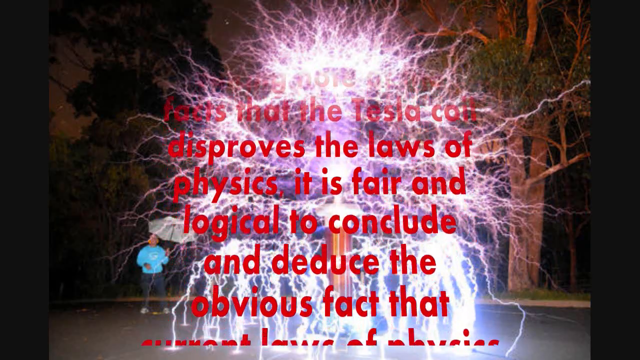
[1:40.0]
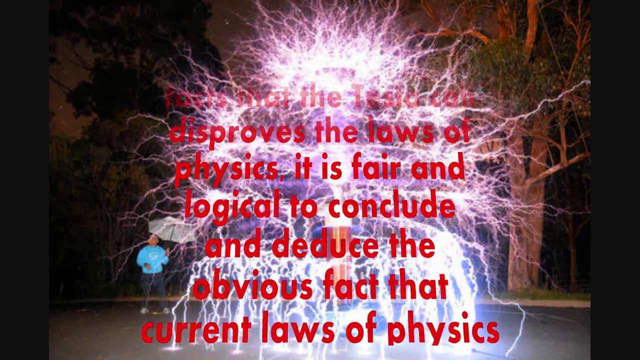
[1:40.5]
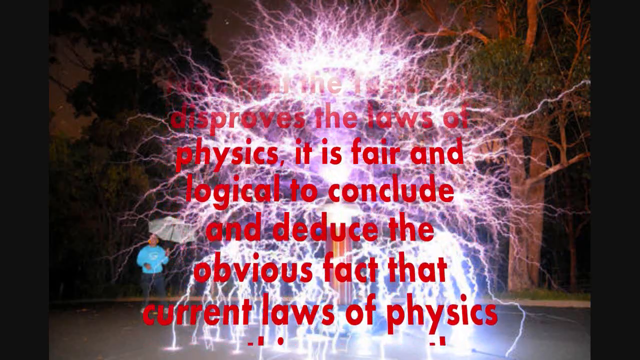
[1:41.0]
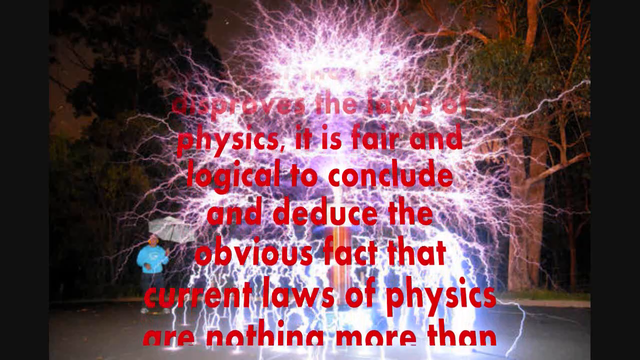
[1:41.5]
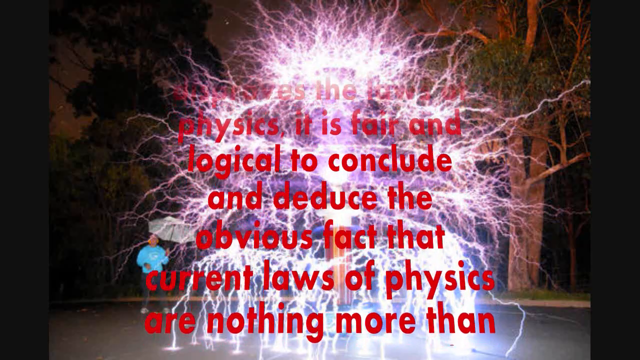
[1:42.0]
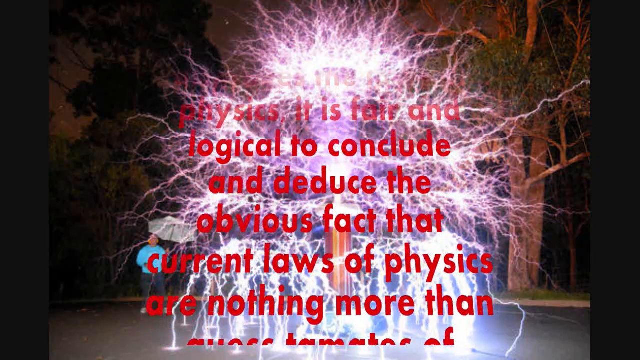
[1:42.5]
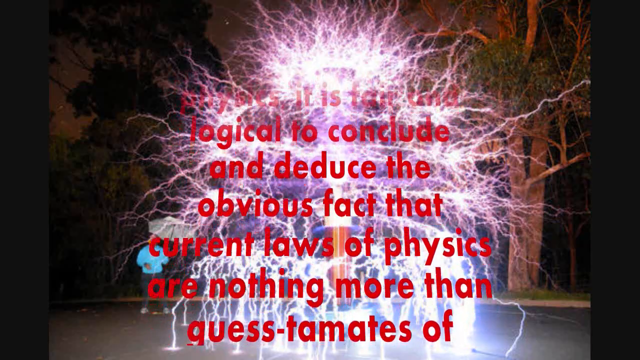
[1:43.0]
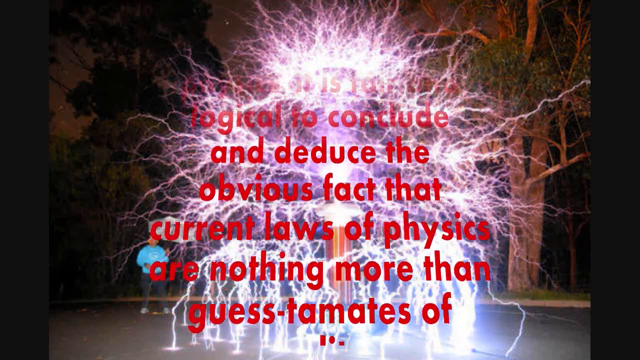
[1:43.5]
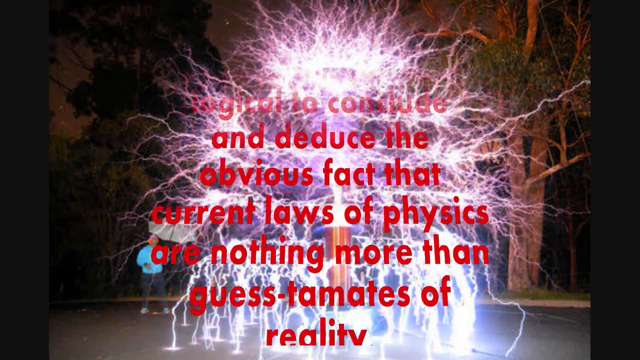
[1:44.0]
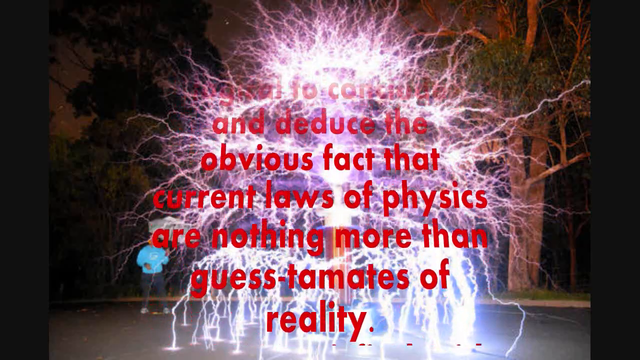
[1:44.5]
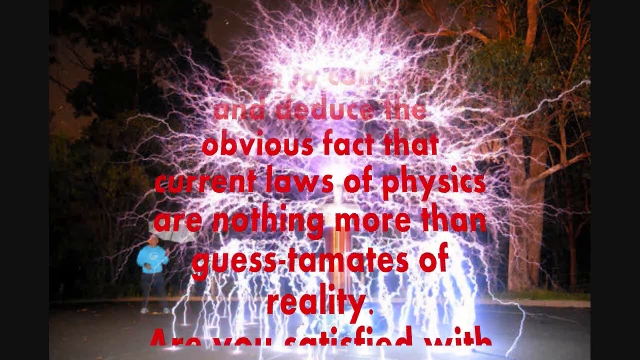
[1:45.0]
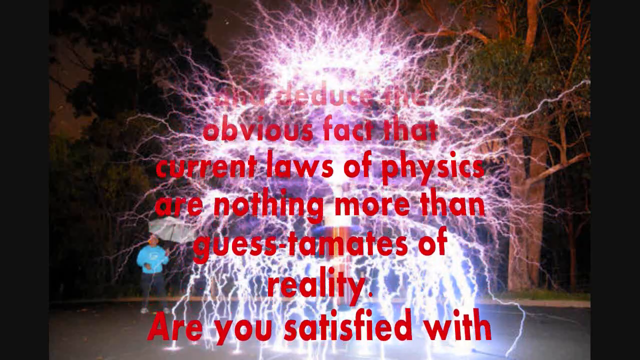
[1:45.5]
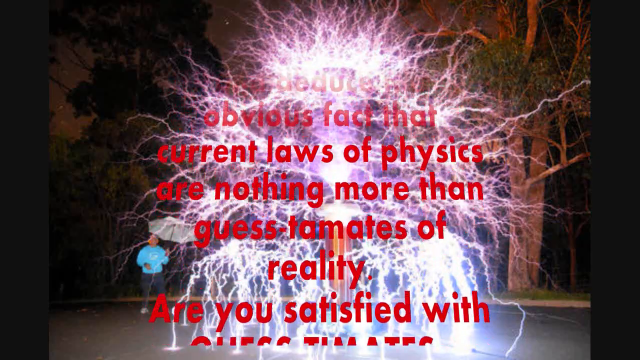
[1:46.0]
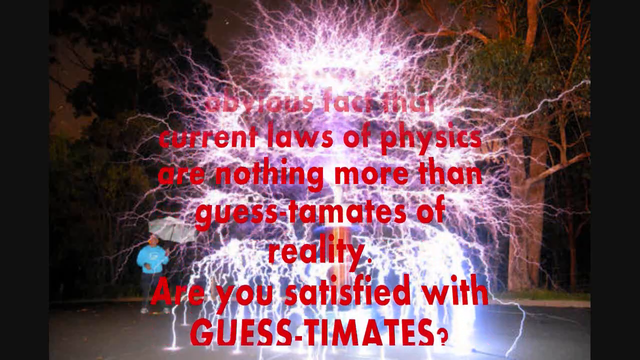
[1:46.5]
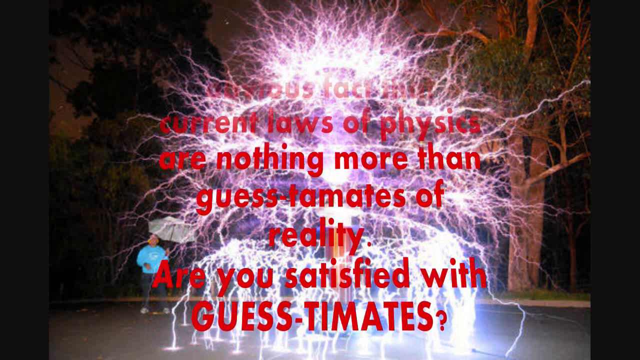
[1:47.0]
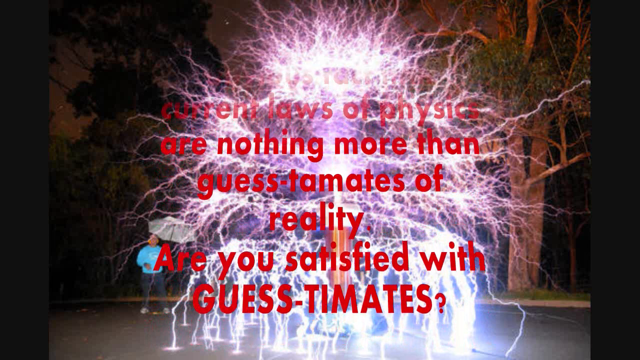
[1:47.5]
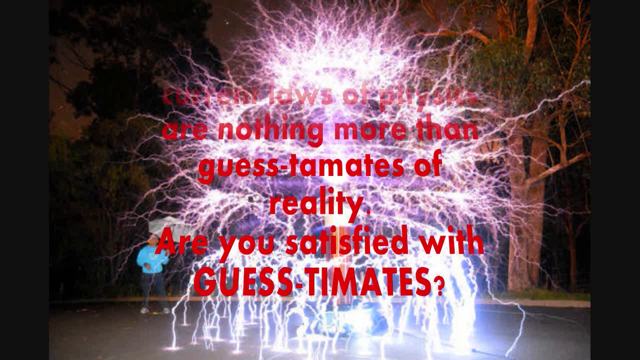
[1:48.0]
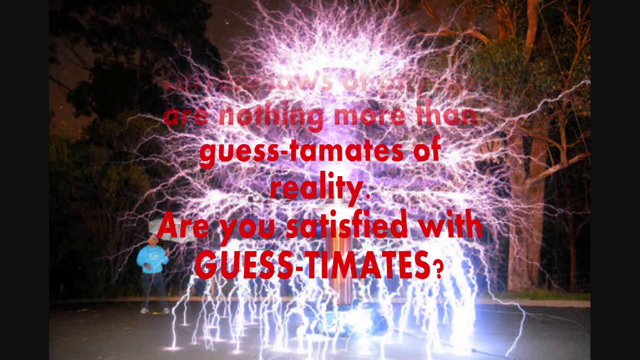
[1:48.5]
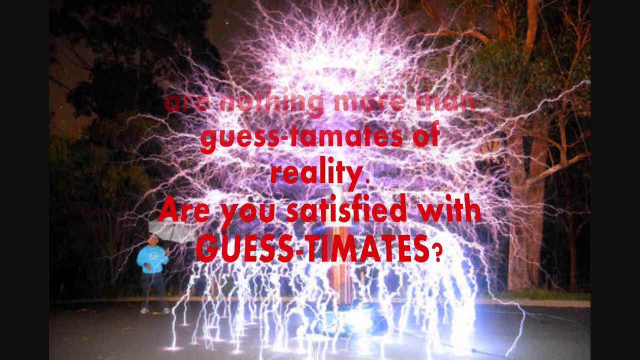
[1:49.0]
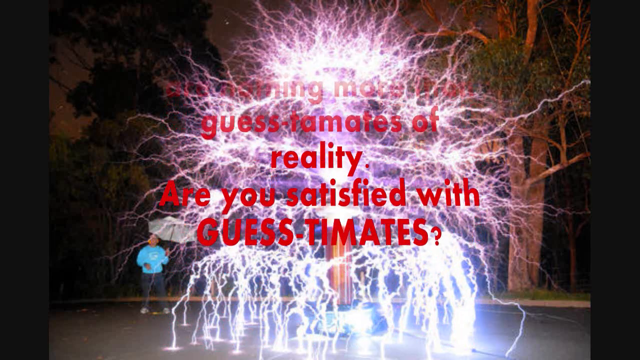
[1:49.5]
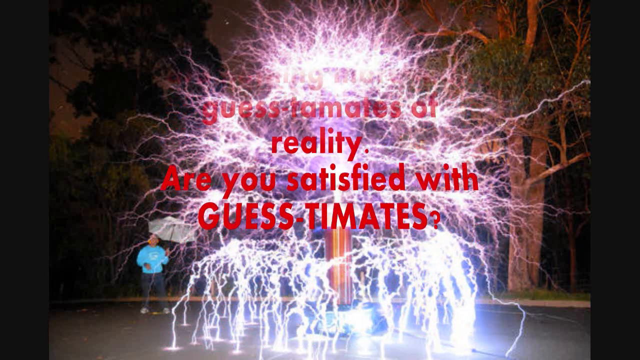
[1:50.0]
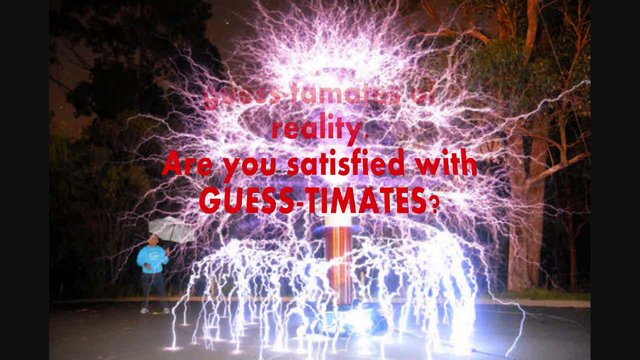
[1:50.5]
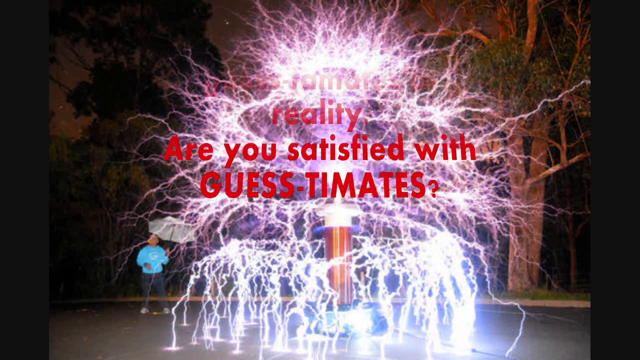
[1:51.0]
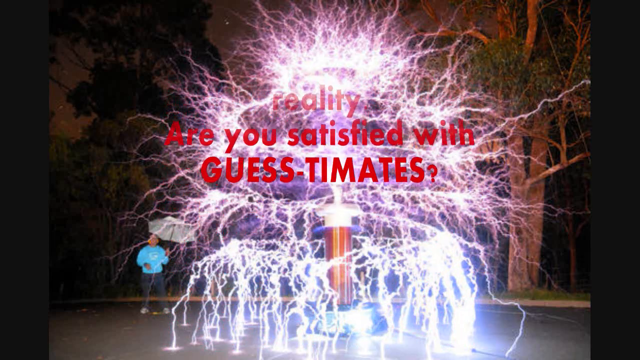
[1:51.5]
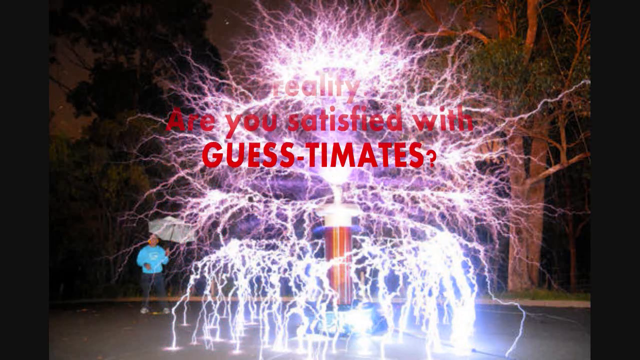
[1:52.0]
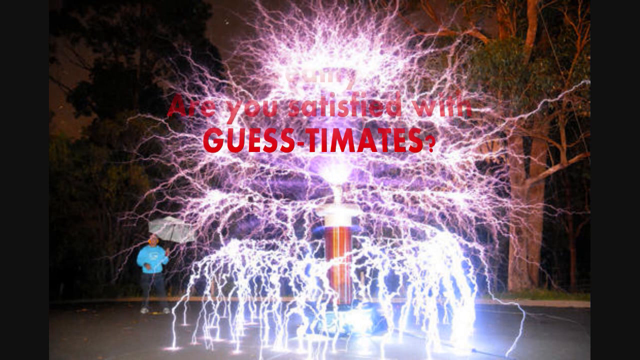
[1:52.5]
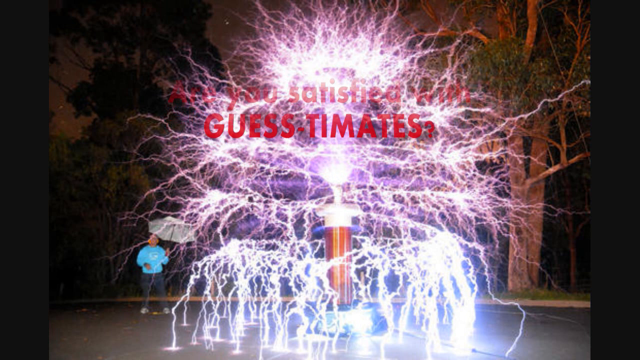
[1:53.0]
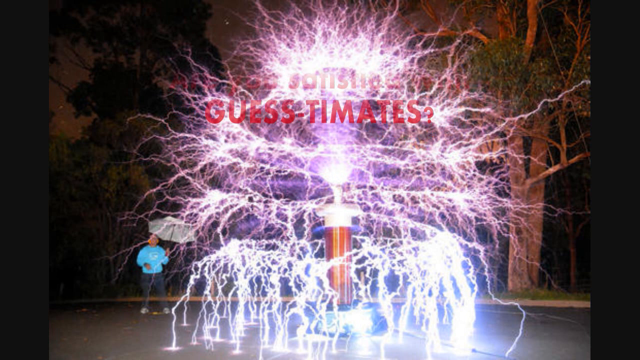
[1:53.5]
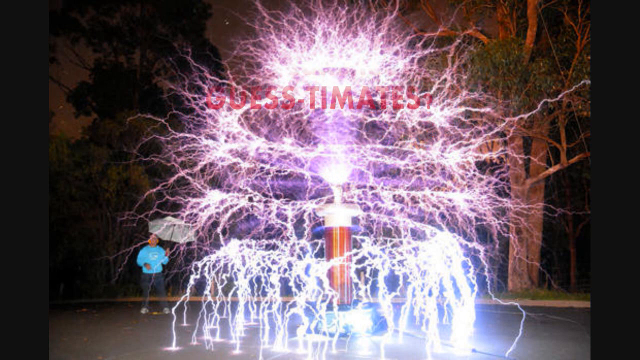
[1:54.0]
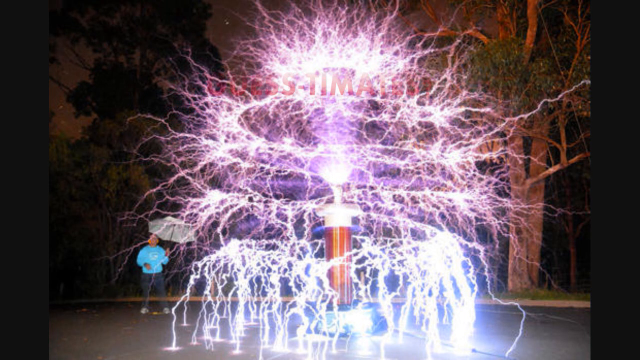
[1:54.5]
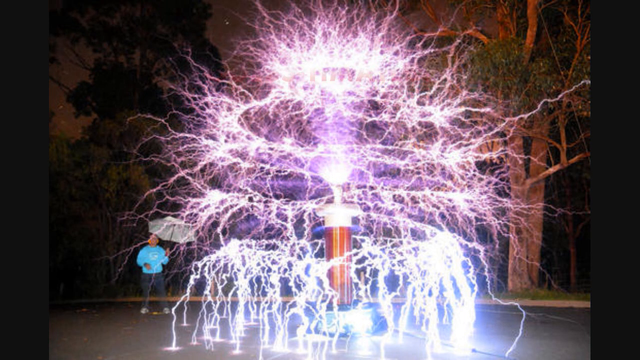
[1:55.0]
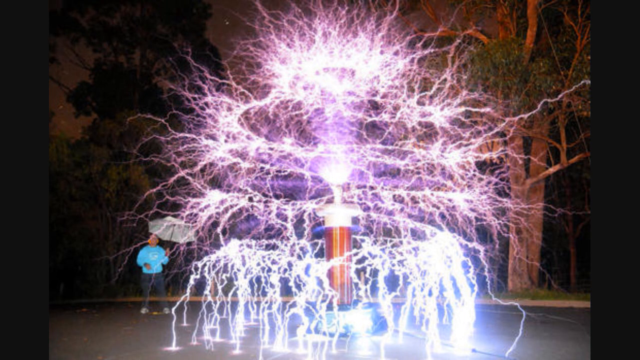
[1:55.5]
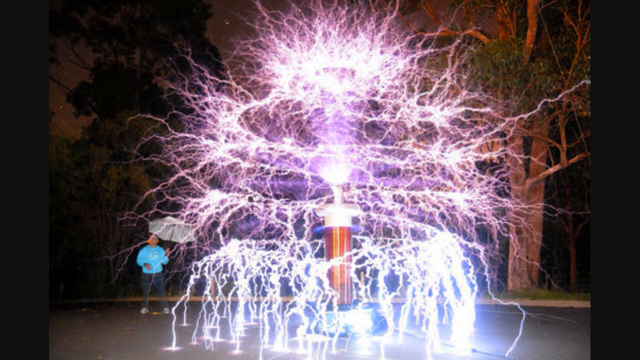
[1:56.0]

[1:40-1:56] Text on screen states "it is fair and logical to conclude and deduce the obvious fact that current laws of physics are nothing more than guesstimates of reality. Are you satisfied with guesstimates?" The word guesstimate is spelt in two different ways. The text scrolls away to the top of the page, leaving the outdoor photo of the Tesla coil discharging in hundreds of different directions at night, while the man in the blue sweatshirt holding an umbrella continues to look at it.